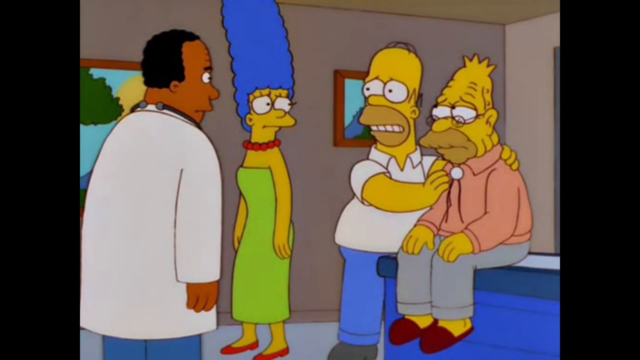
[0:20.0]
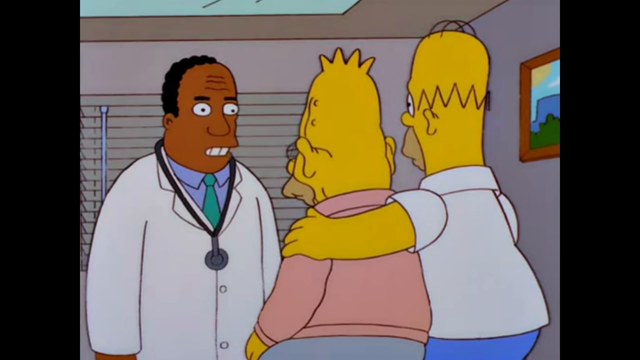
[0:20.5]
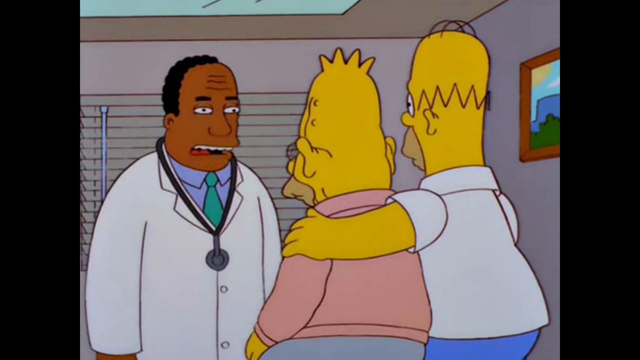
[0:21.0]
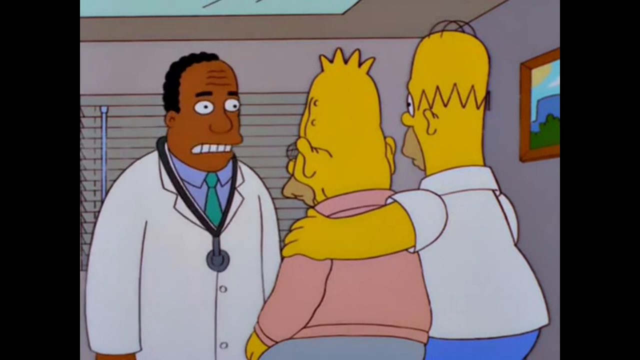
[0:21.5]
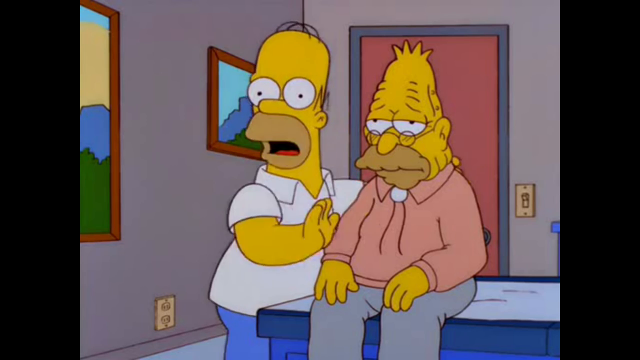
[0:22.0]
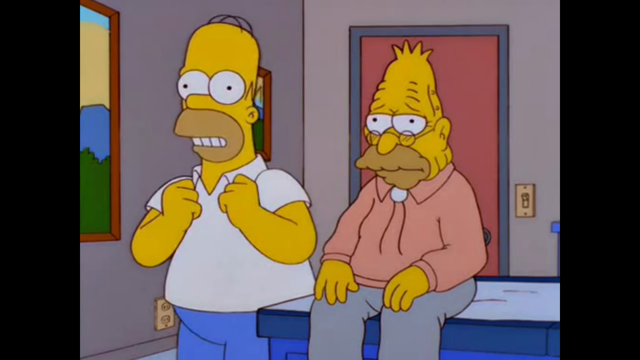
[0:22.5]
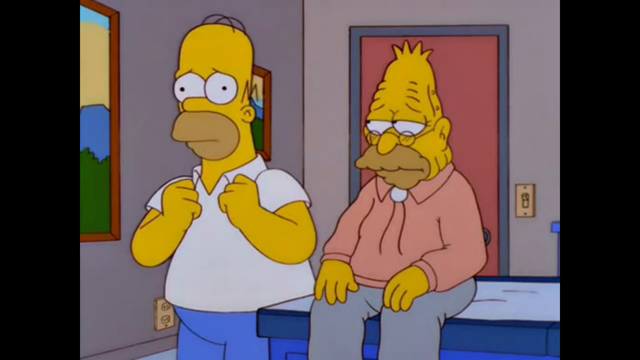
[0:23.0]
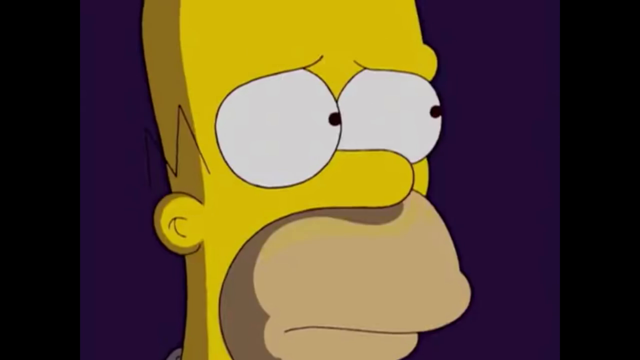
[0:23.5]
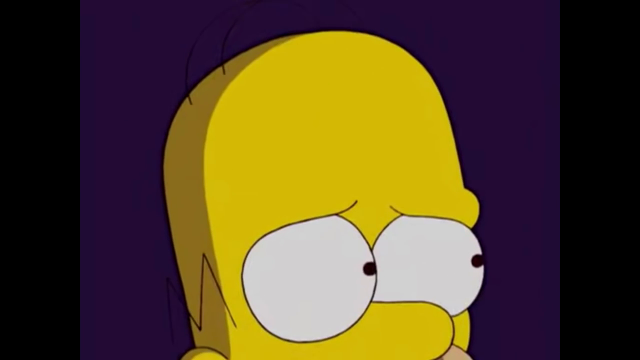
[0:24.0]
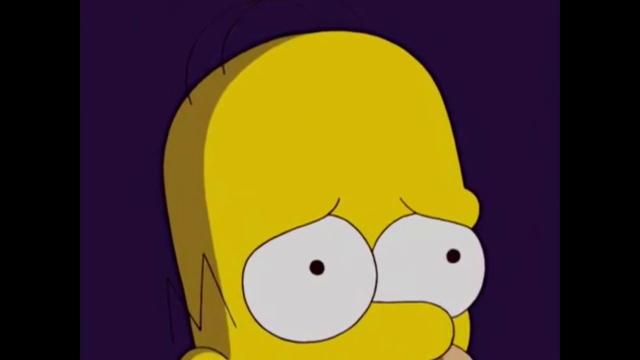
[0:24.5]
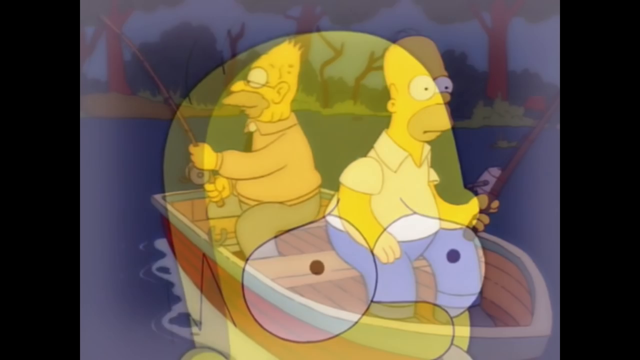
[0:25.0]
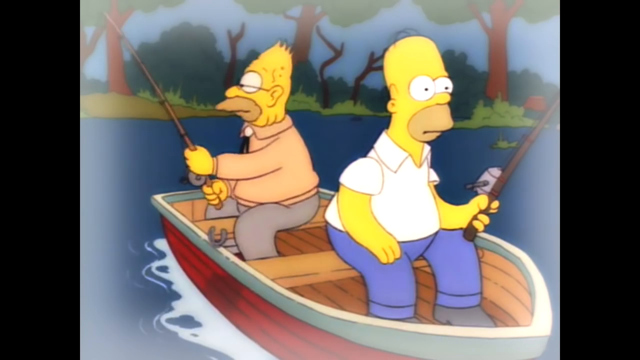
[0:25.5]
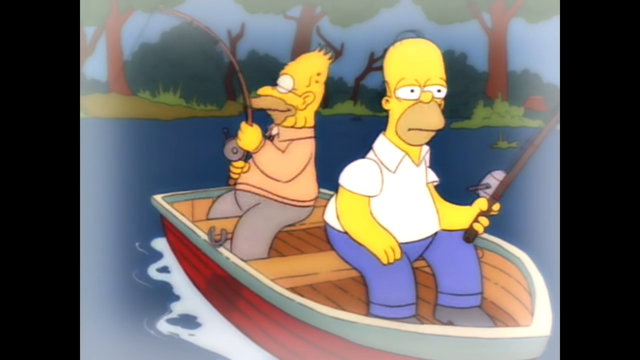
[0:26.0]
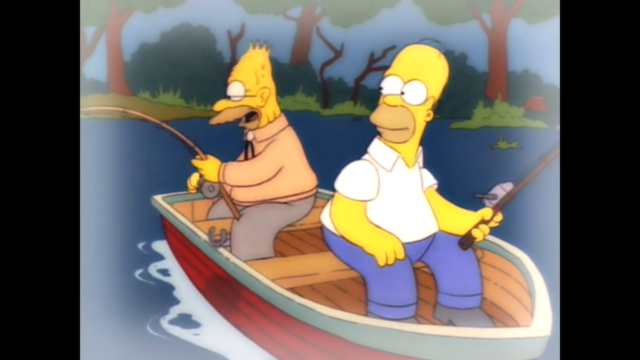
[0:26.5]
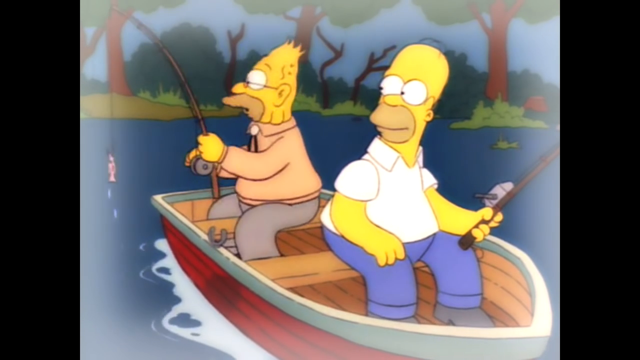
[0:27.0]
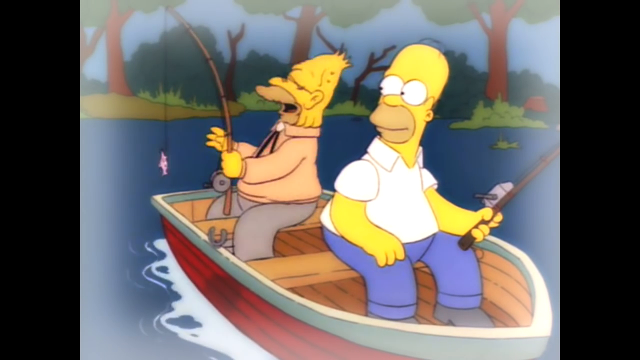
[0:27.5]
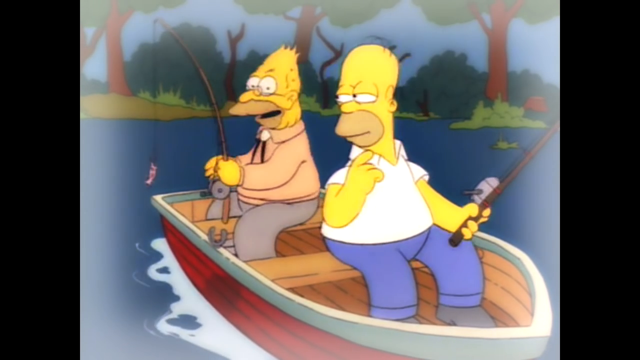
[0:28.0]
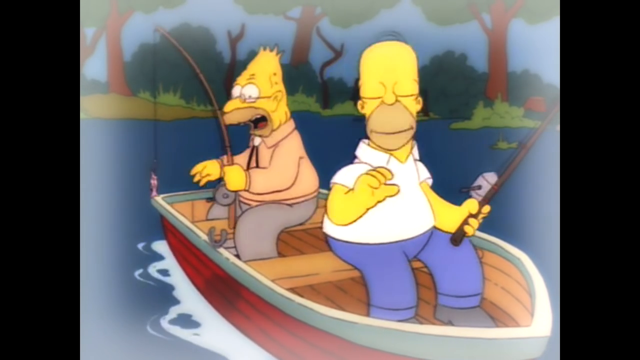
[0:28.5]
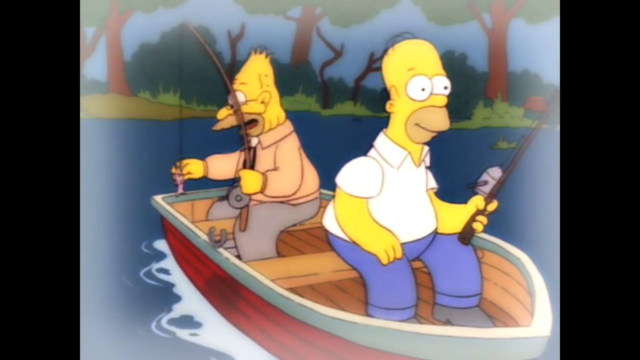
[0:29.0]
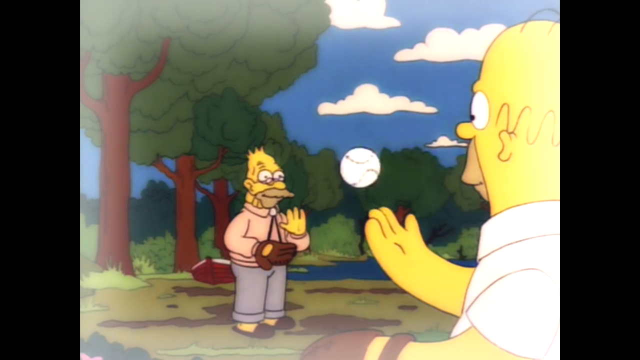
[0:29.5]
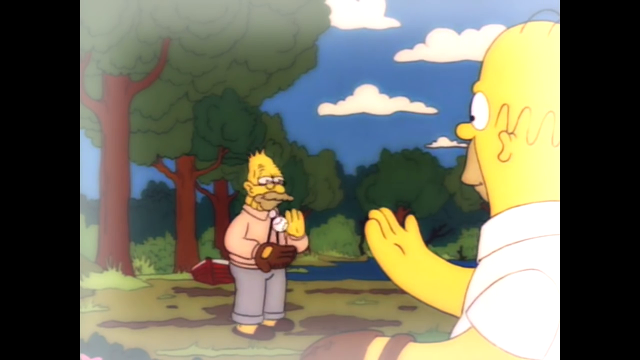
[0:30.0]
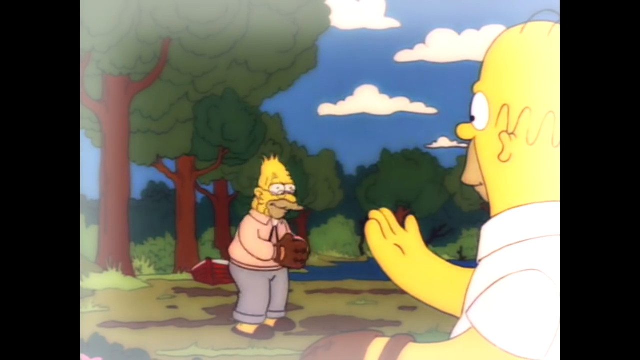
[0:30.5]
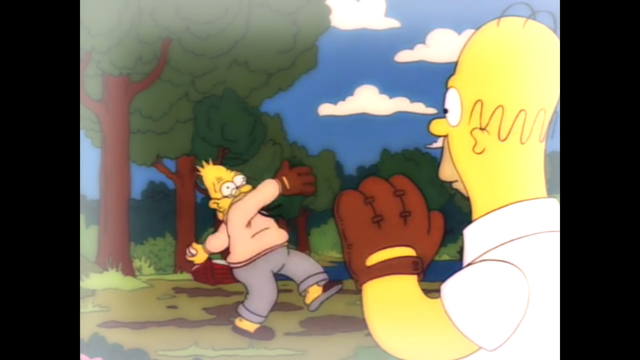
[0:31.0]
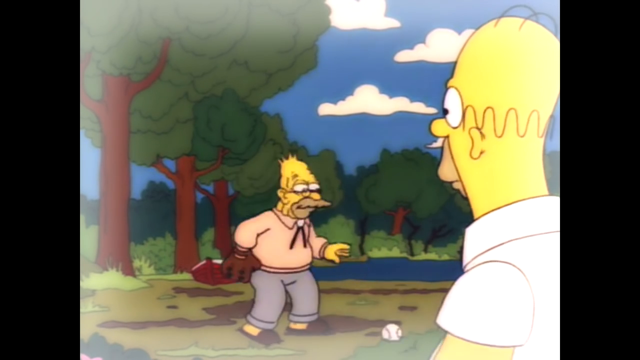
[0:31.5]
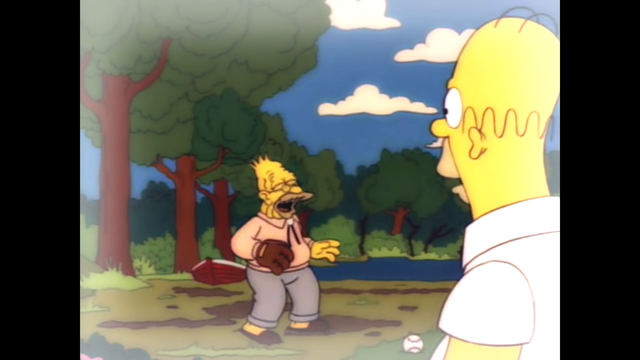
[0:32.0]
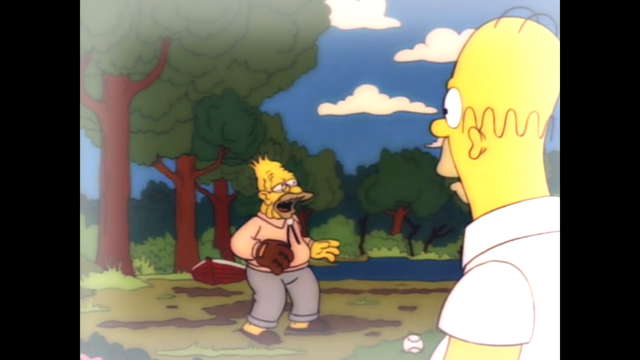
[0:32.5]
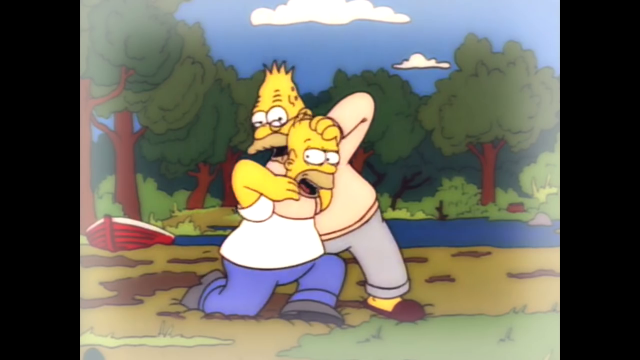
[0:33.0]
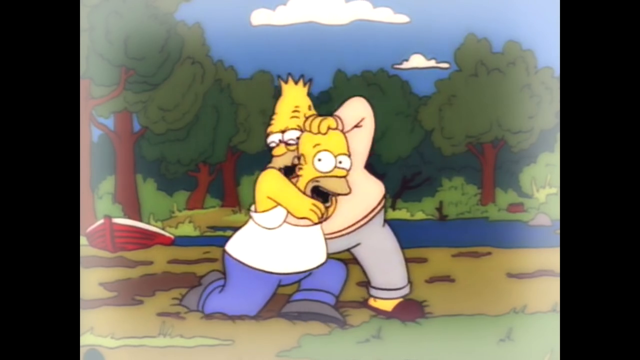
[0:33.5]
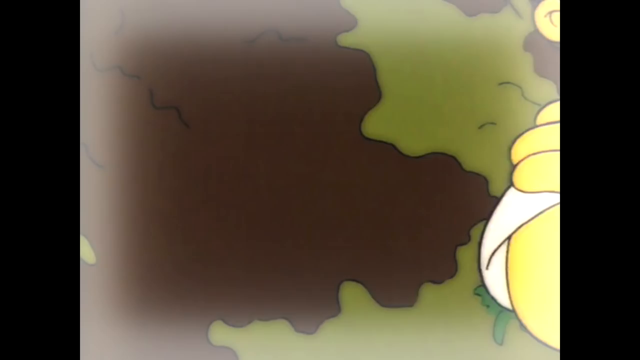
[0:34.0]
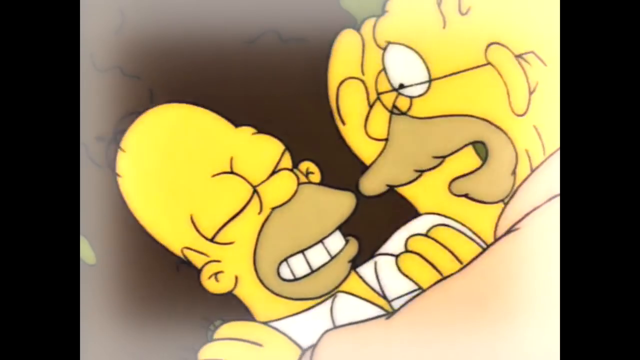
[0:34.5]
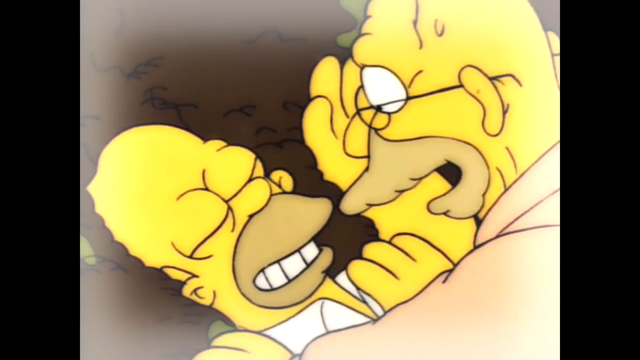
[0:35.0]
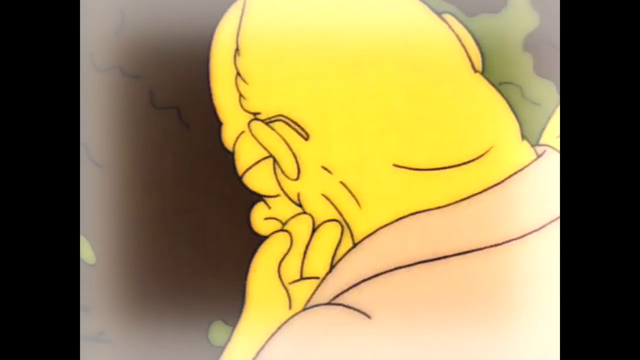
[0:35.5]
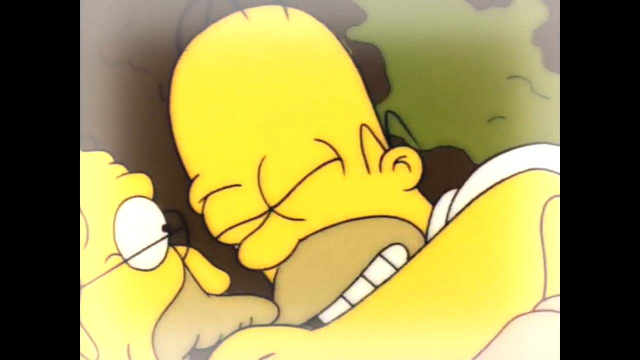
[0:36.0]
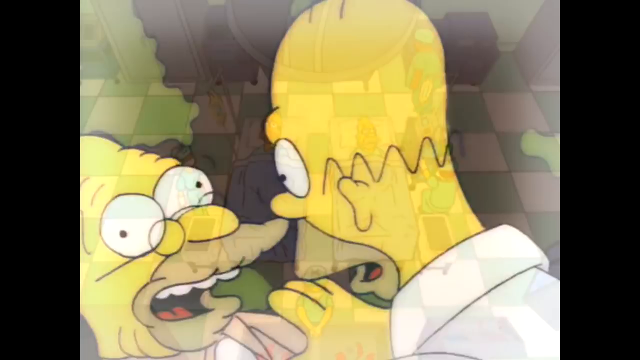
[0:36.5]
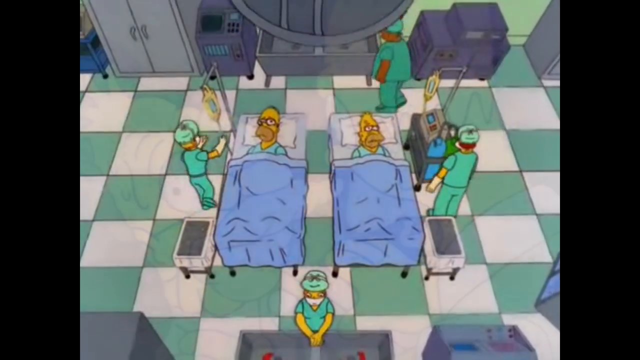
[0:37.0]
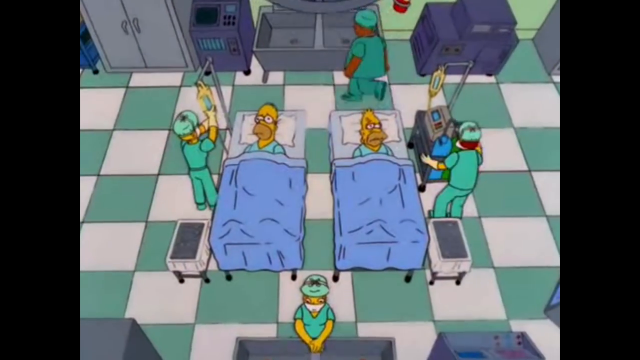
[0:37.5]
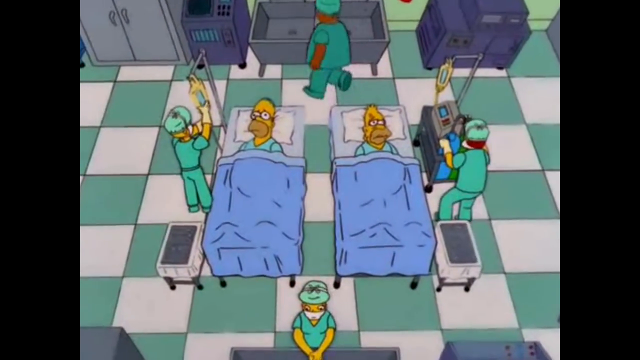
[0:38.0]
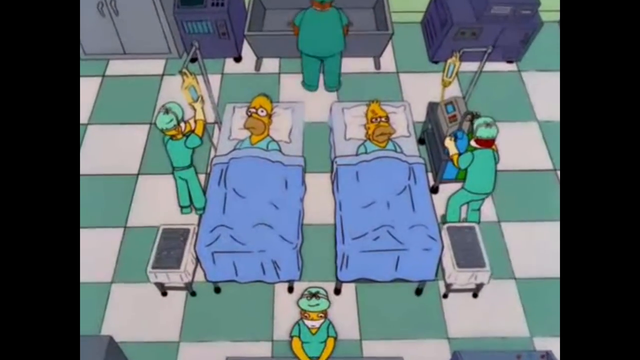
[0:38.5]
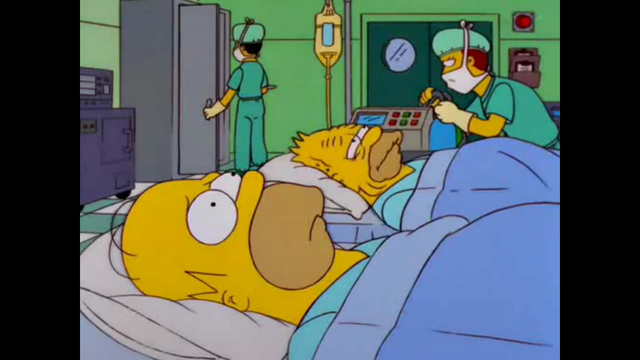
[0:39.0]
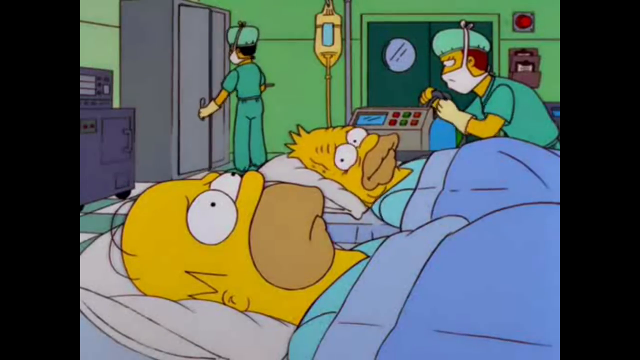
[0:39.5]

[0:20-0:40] A doctor with a stethoscope around his neck is on the far left, looking at Marge Simpson and Homer Simpson in the middle, while Homer's father sits on the edge of a bed on the far right. Homer looks very distraught and worried about his father, with his hands on him. The doctor talks to Homer, who seems not to understand what is being said. Homer remembers good times with his father: throwing balls and catching them with gloves, and catching fish from a boat on a river. Then a scene shows them in the hospital doing blood transfusions as Homer tries to save his father's life, appearing terrified of losing him.